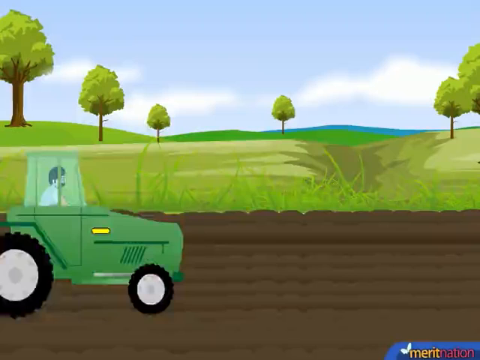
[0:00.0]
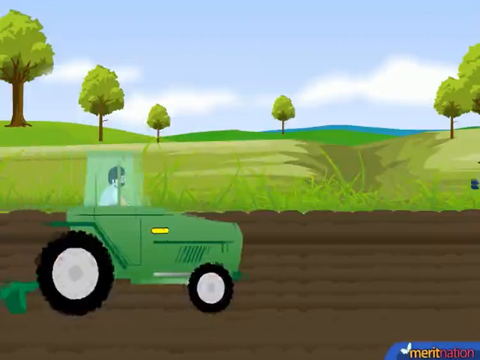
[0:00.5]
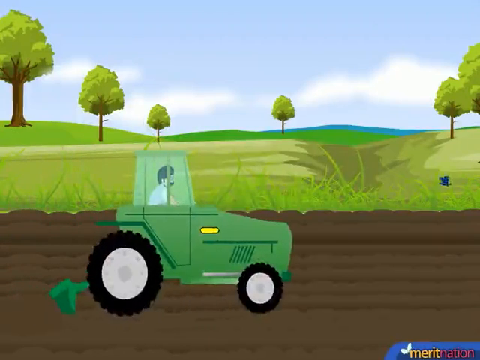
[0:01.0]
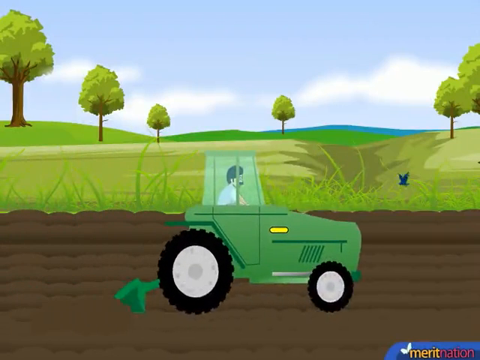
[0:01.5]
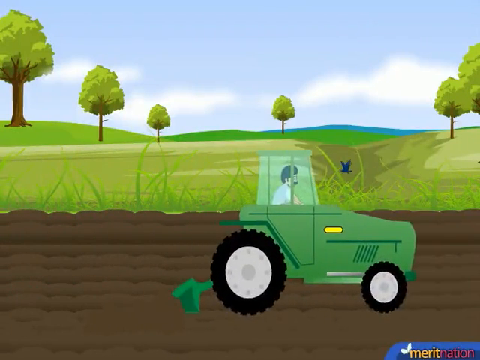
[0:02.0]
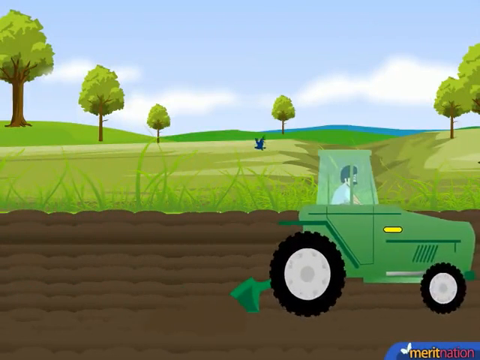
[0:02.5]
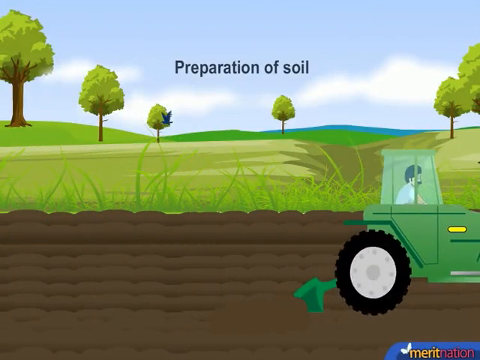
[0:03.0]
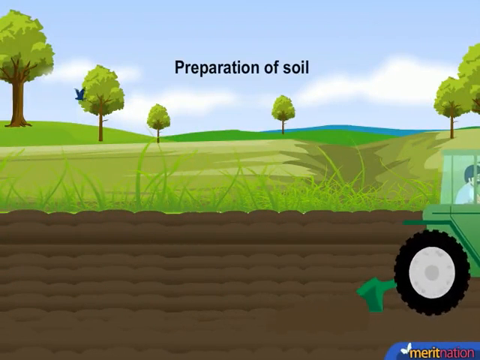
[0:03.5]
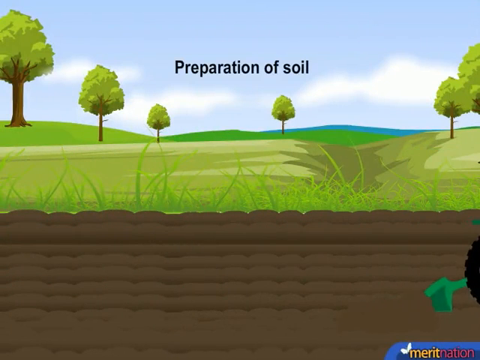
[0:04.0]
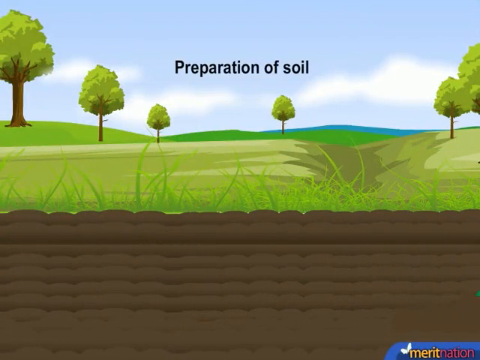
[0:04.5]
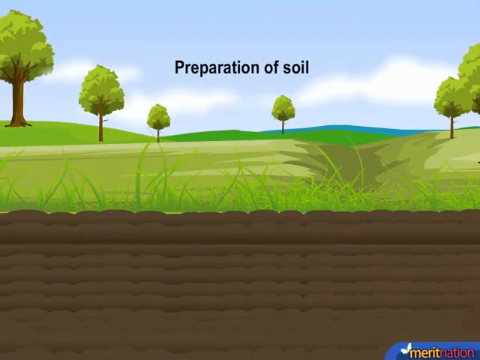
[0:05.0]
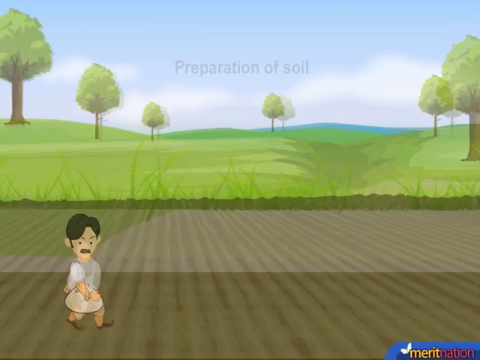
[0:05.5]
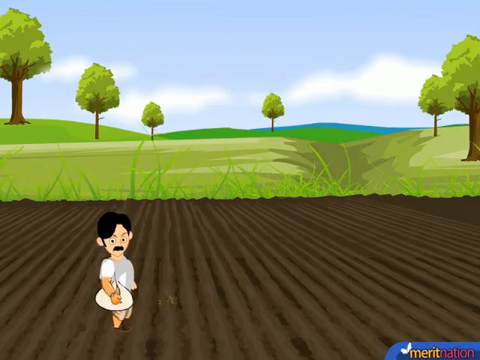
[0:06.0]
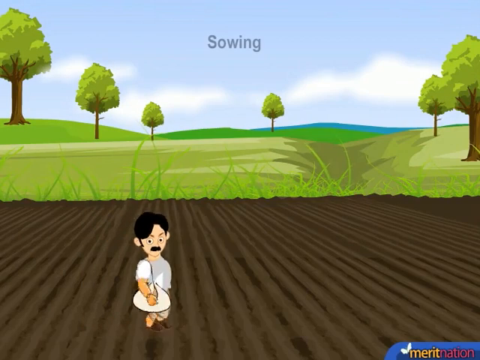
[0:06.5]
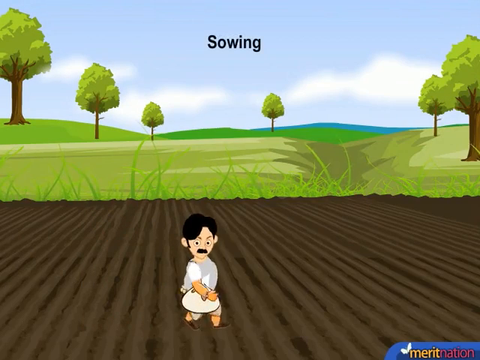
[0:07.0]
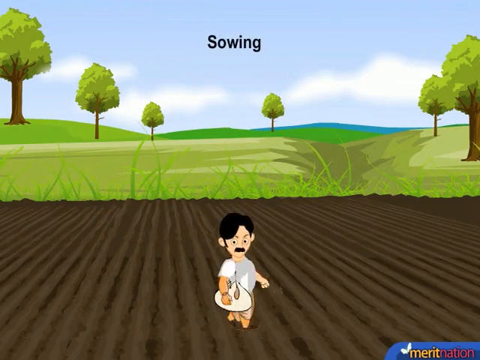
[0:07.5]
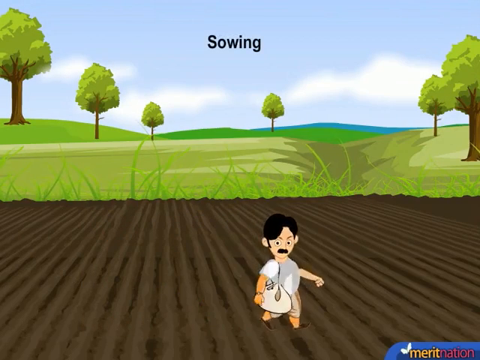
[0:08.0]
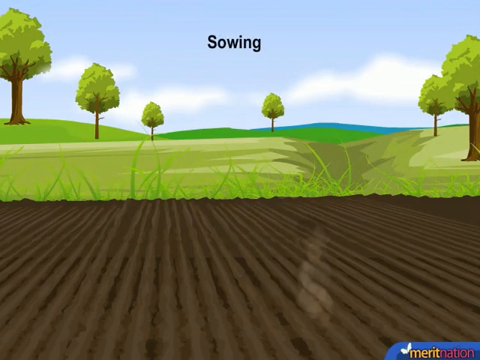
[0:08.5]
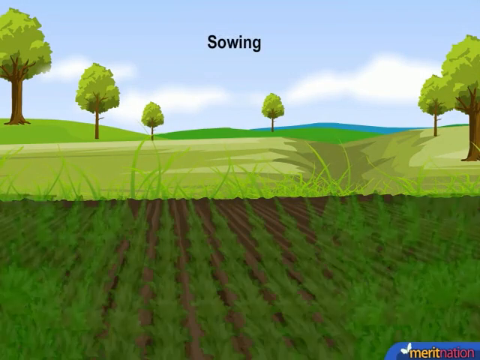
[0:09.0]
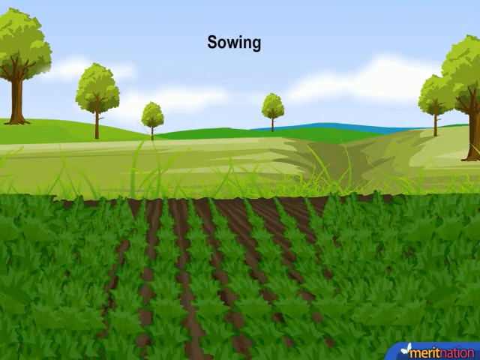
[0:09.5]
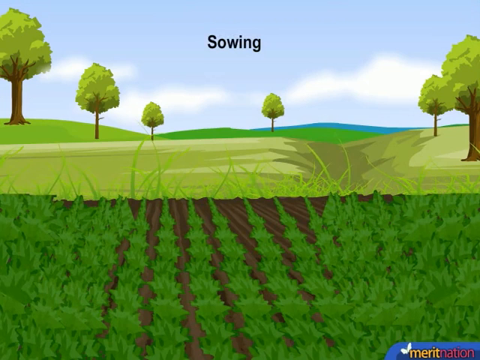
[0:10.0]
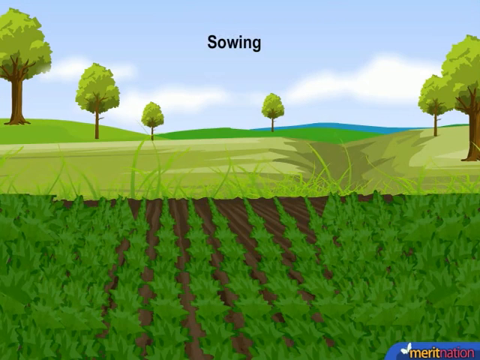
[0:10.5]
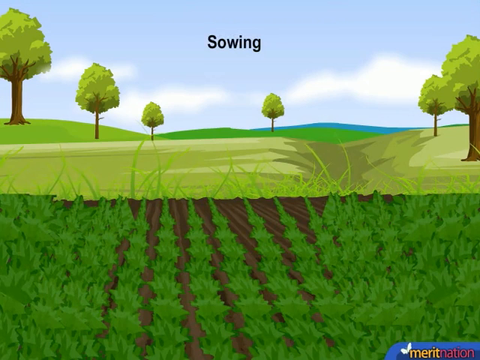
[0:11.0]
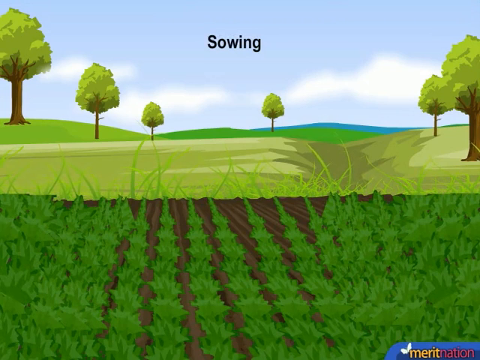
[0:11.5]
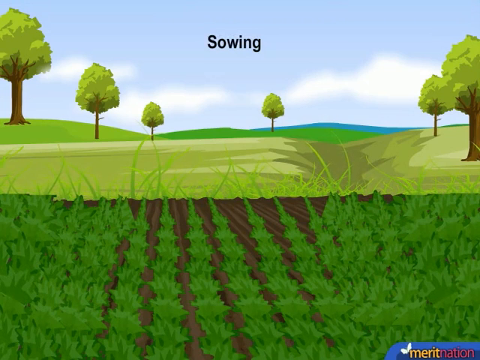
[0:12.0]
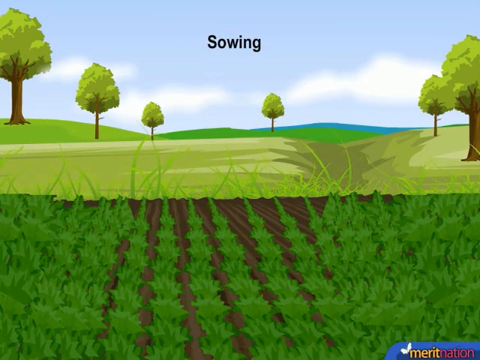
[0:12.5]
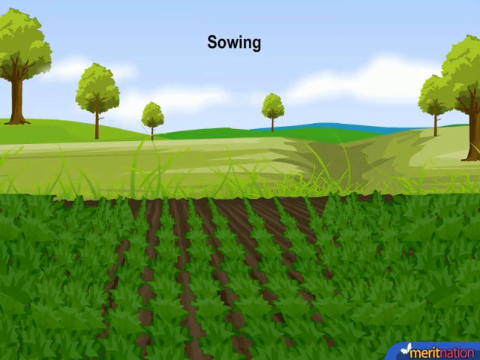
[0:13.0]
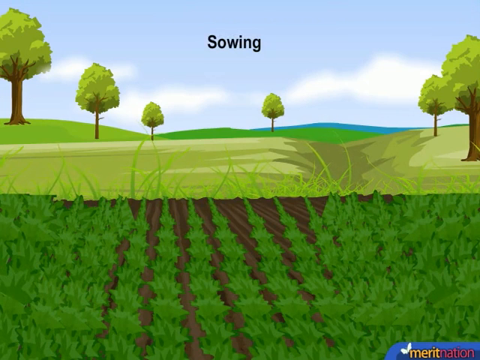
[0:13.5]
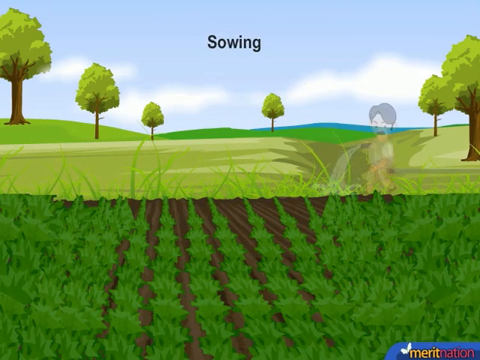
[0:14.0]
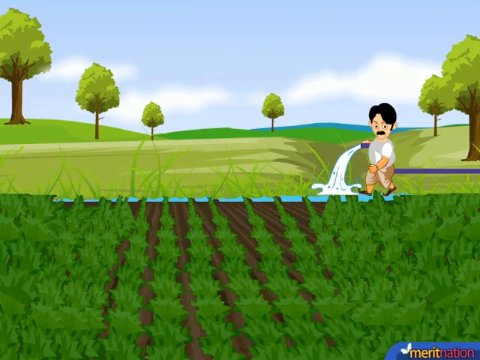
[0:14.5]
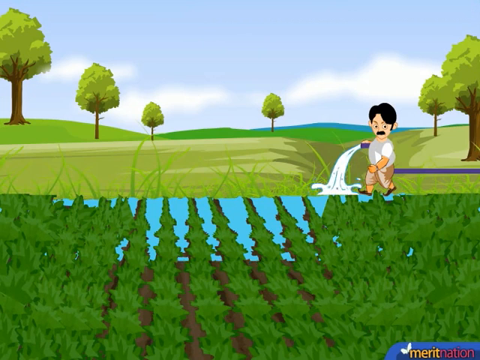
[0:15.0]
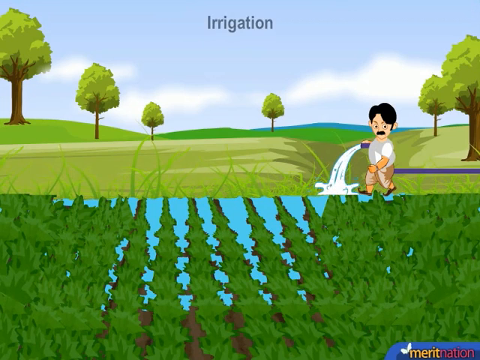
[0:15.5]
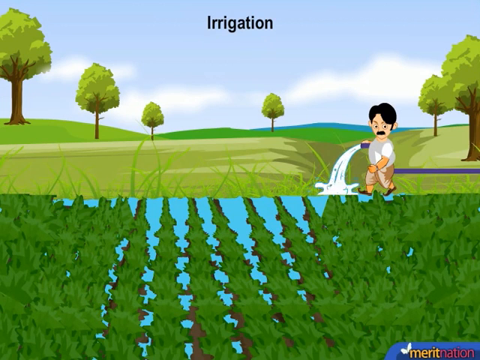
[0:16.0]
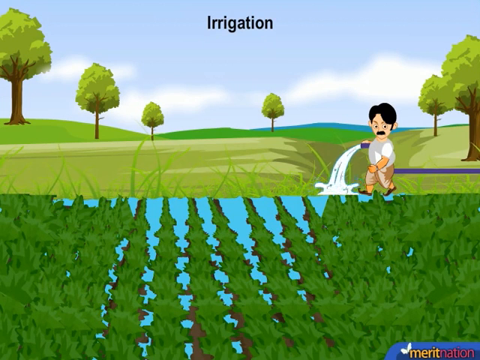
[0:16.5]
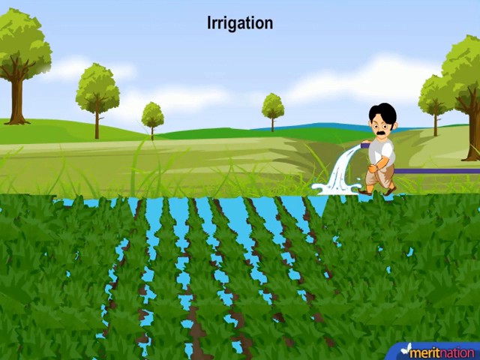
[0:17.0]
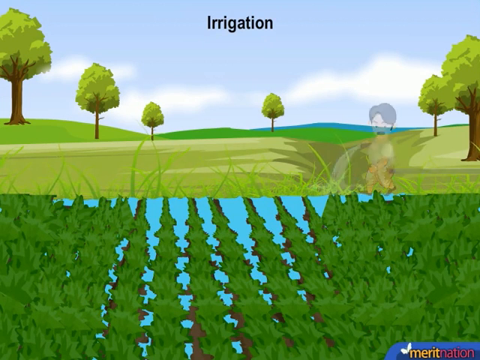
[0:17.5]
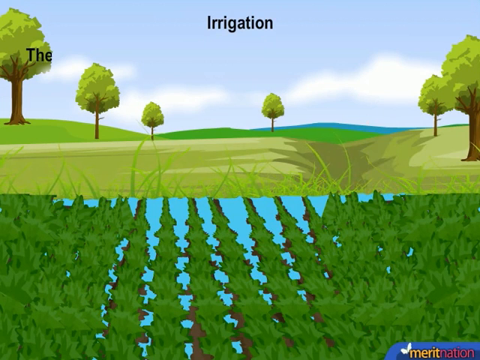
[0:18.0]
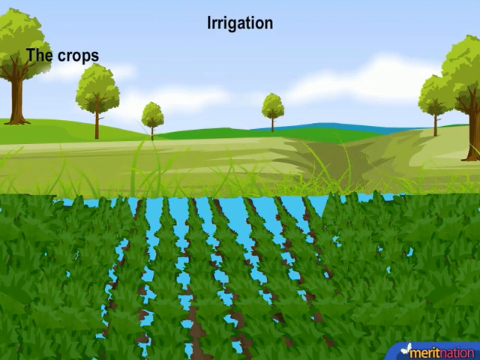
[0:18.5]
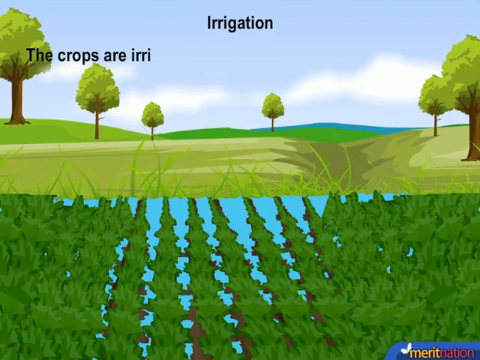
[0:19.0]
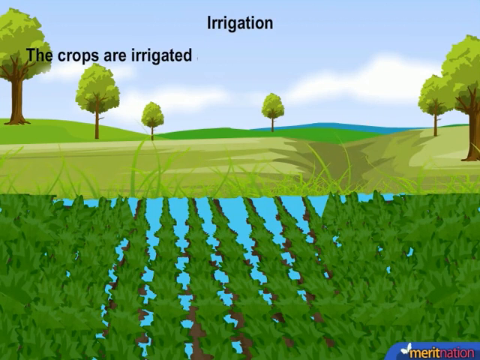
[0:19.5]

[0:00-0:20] A cartoon animation opens with a light green truck rolling across the screen. A child walks, then holds a hose and waters the grass. The background landscape is a green hilly field with several trees. Black text appears at the top of the video; the first text says "preparing the soil," followed by text about how to do irrigation. The truck moving across is very short, and a man is inside it. A man with a mustache walks across a field, watering the crops and irrigating the plants. A blue bird flies across the sky, which is a very light blue with white clouds.